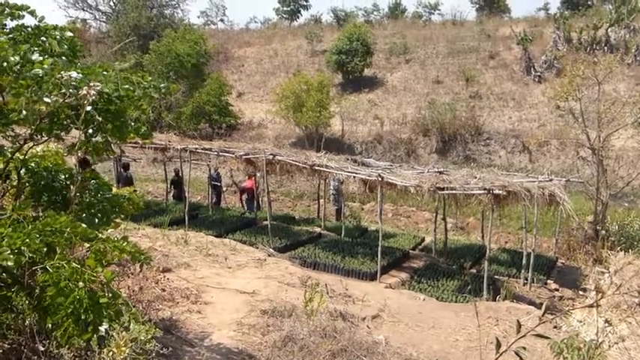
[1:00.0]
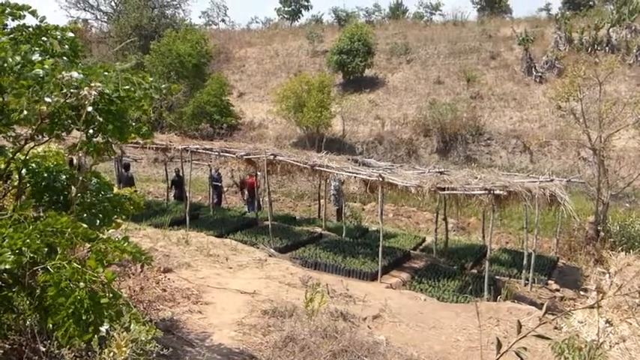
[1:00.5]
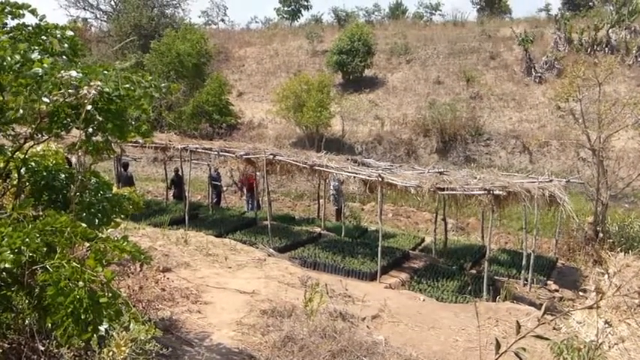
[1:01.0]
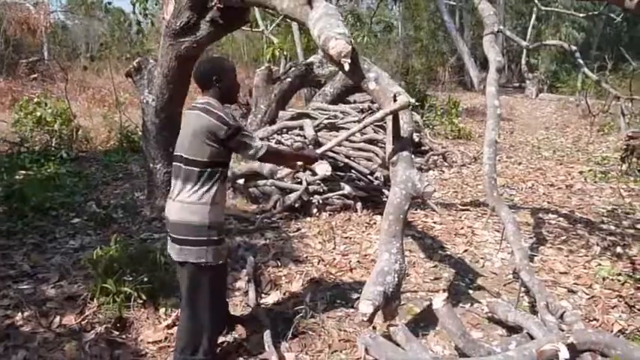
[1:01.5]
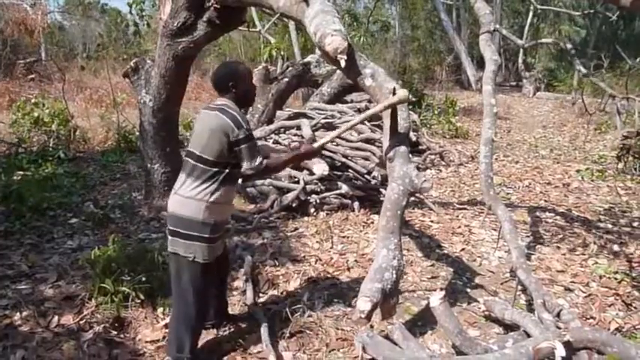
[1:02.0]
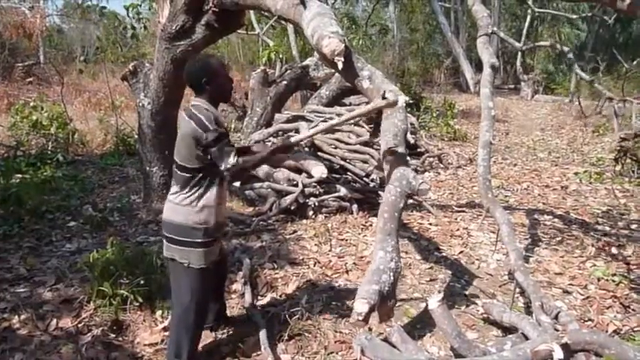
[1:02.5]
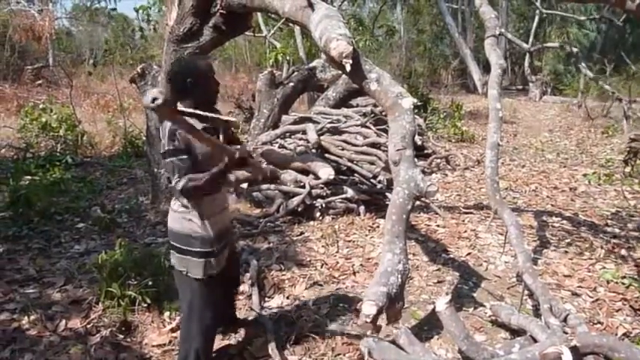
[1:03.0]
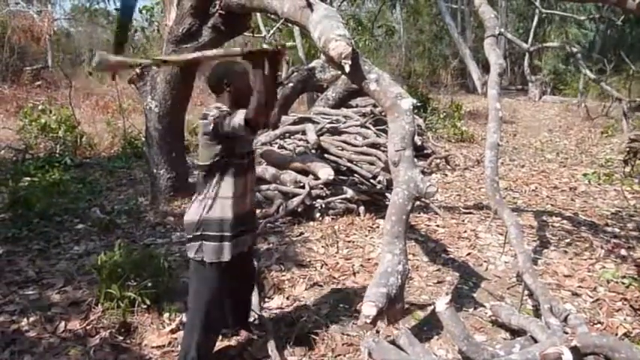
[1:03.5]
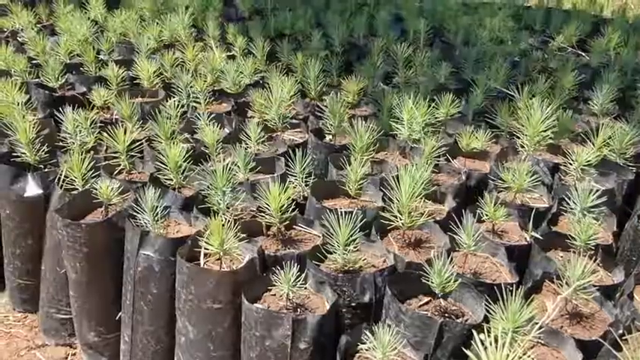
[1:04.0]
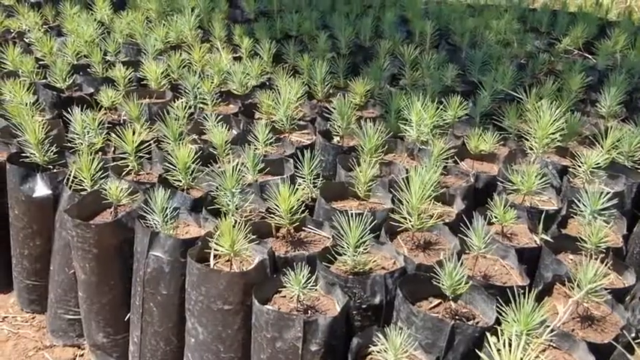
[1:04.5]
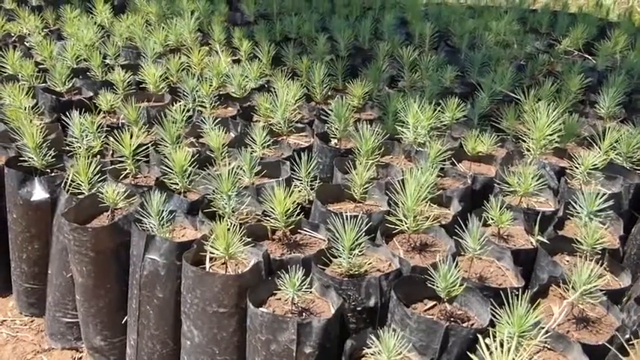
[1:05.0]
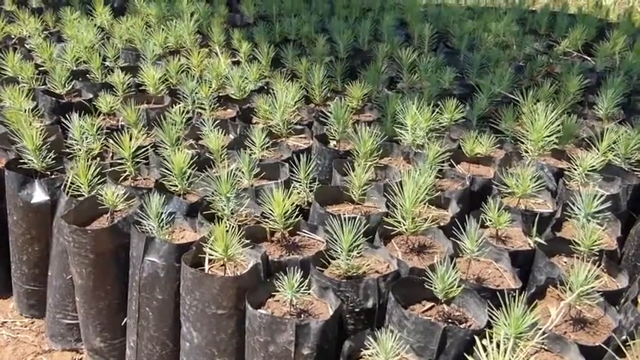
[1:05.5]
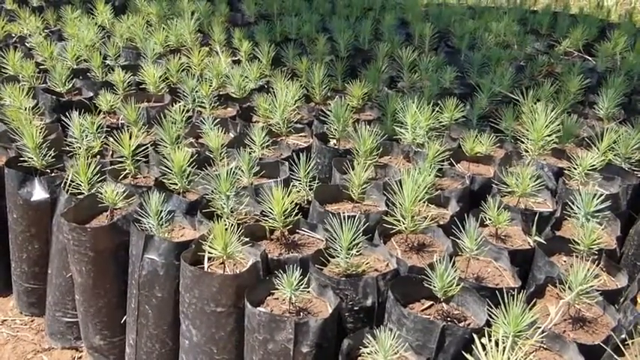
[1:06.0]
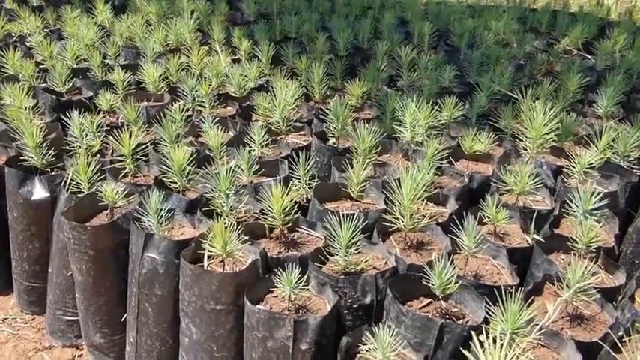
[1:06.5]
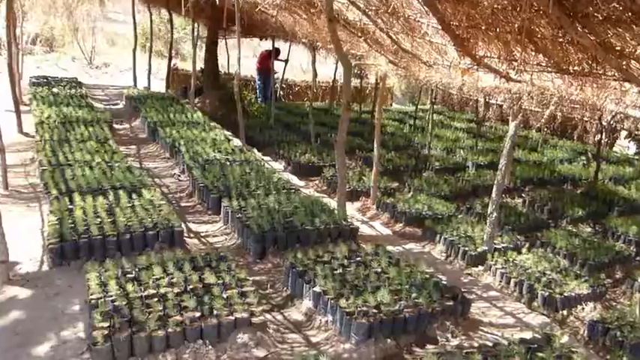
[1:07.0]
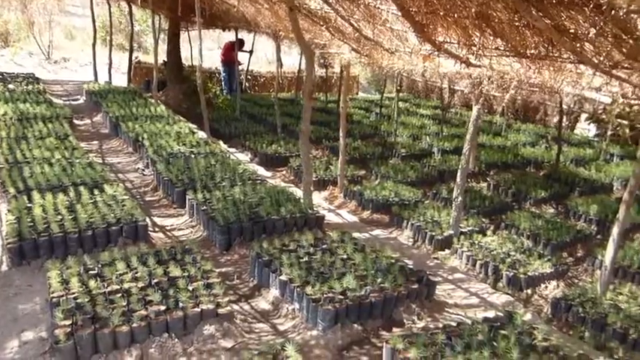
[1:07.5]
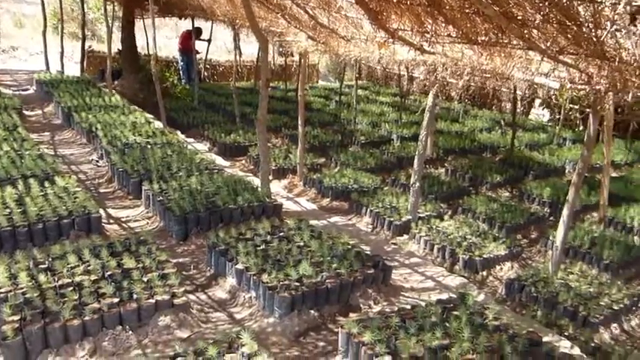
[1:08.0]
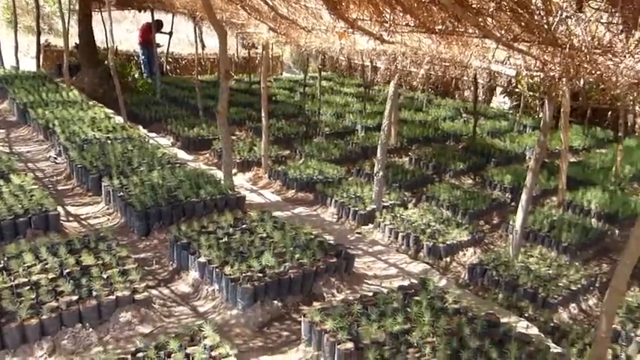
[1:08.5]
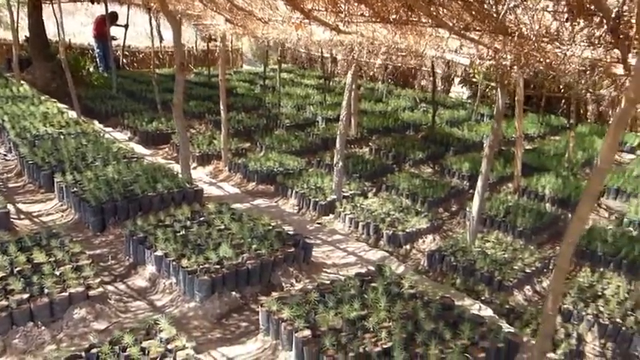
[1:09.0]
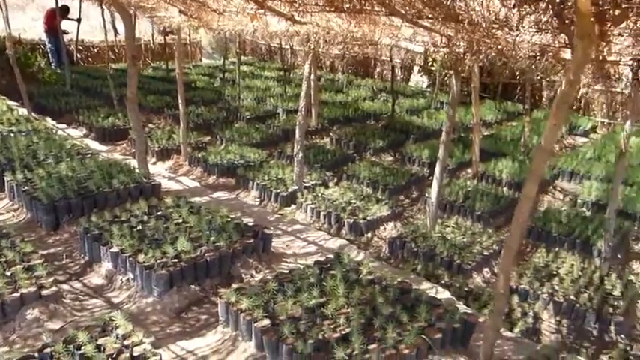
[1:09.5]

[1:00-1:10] A man chops down a tree with an axe. He wears a grey shirt with white and black. In the background are some branches that have already been cut off. Then many small plants are shown planted in special planters made from what seems to be plastic bags full of dirt. All of these planters are under roofs made from tree fiber, kind of away from the sun so they do not burn or become too dry, and a man is checking on them. A group of men take care of the plants. There are many kinds of plants, divided into different zones, possibly planted for different purposes, but all under the same kind of wooden roofs.